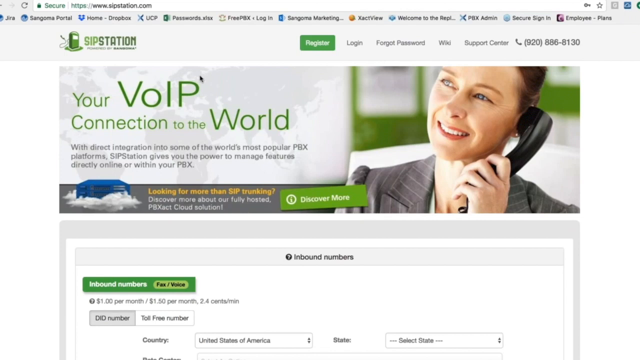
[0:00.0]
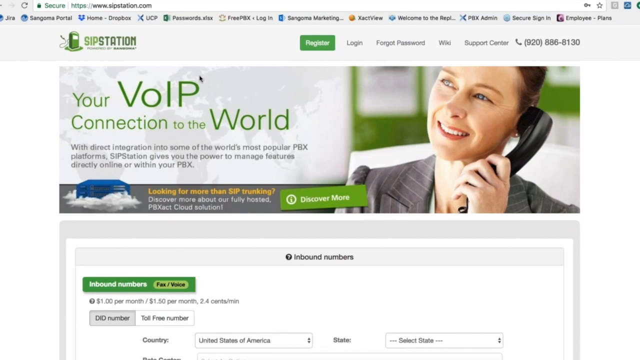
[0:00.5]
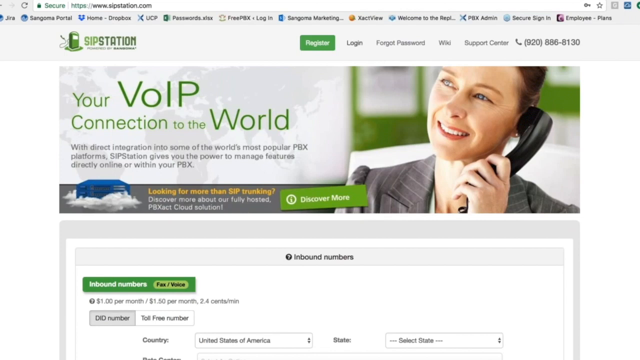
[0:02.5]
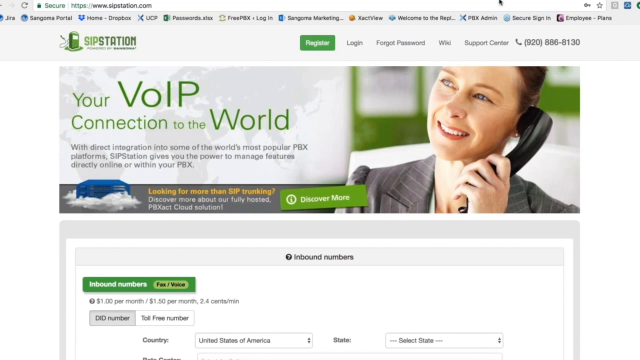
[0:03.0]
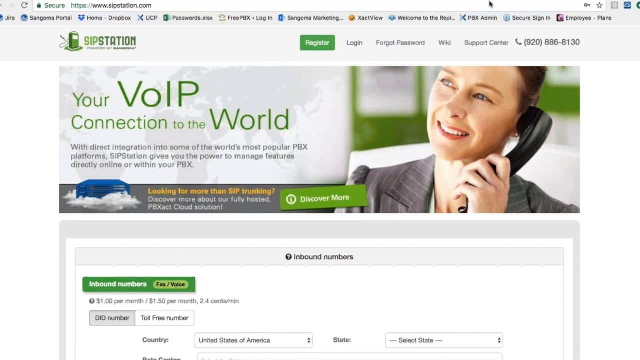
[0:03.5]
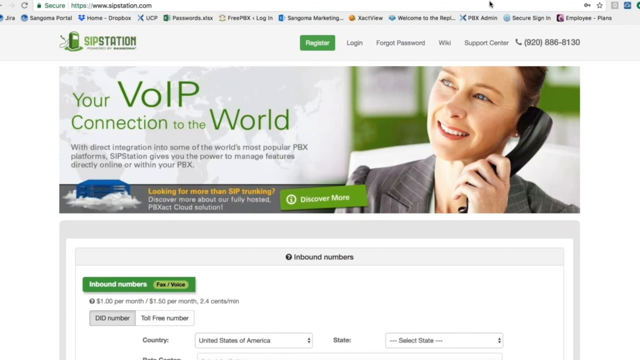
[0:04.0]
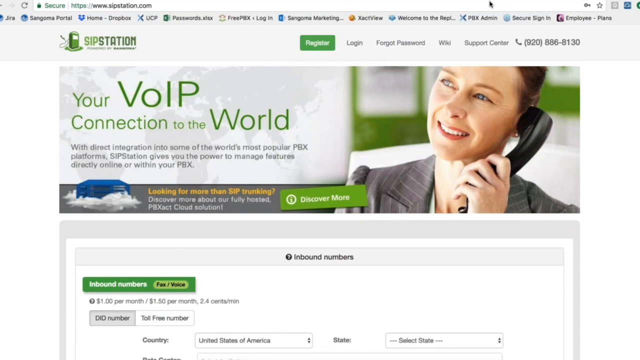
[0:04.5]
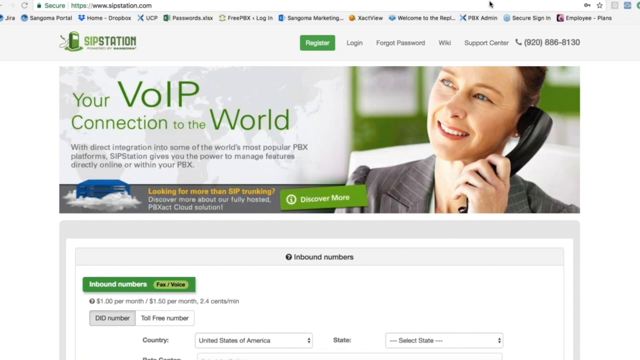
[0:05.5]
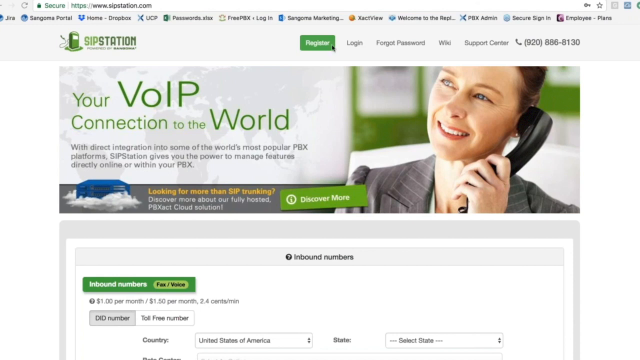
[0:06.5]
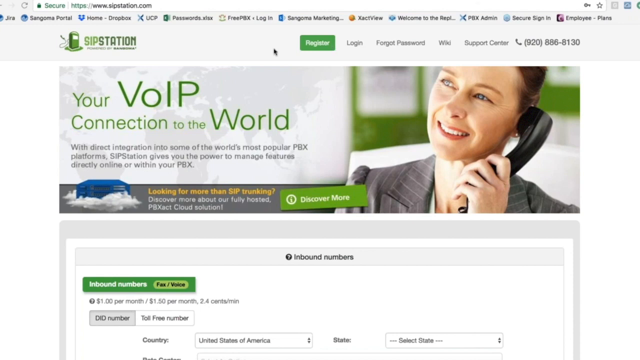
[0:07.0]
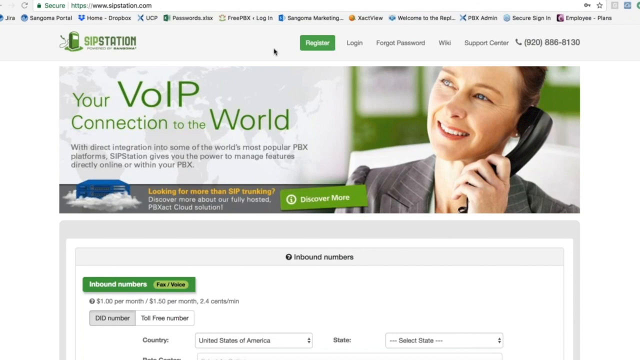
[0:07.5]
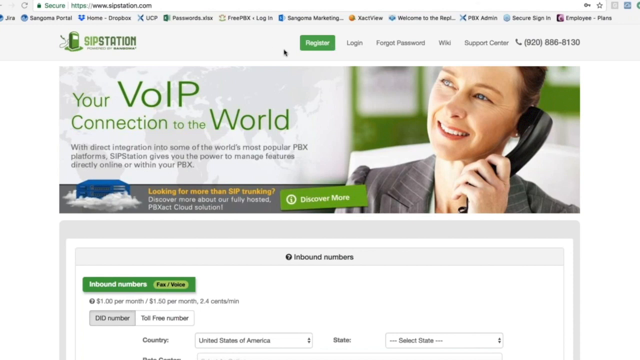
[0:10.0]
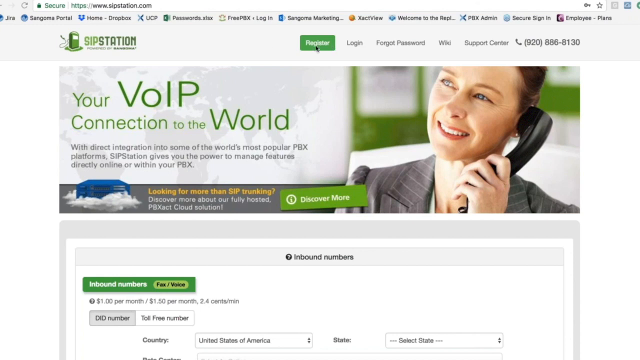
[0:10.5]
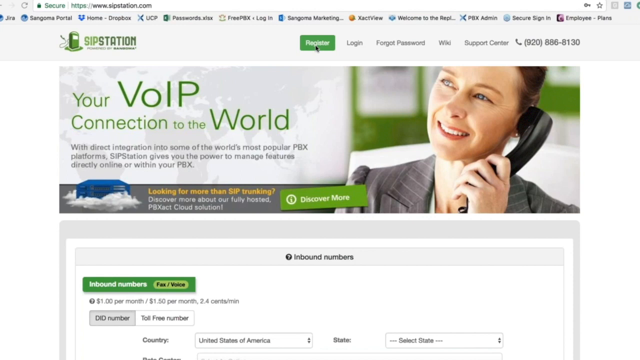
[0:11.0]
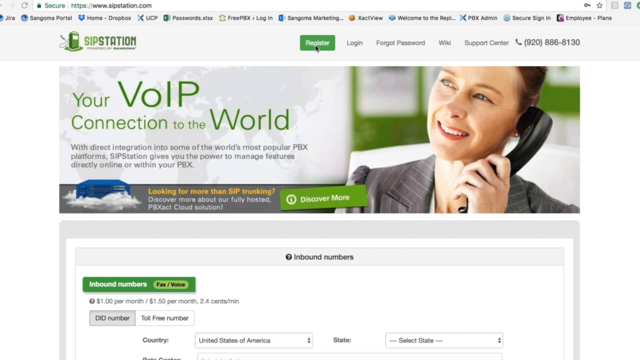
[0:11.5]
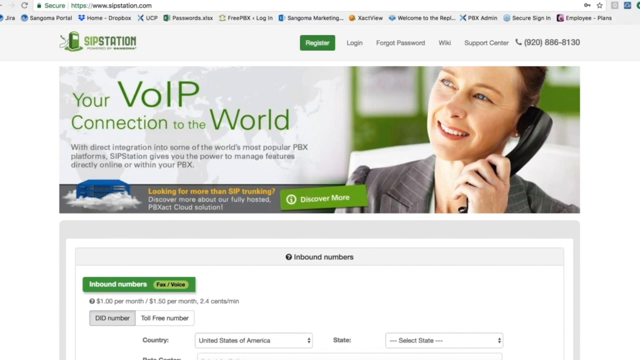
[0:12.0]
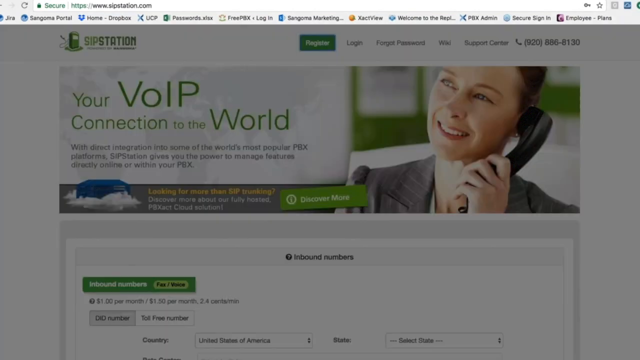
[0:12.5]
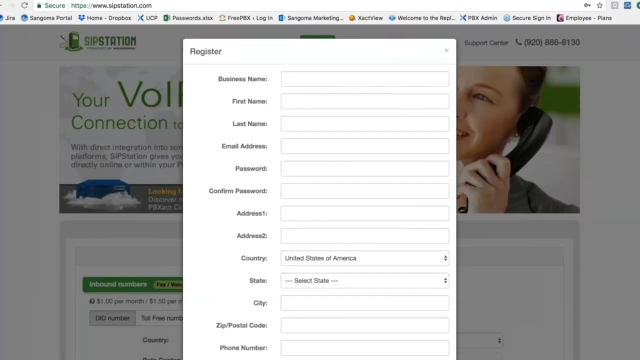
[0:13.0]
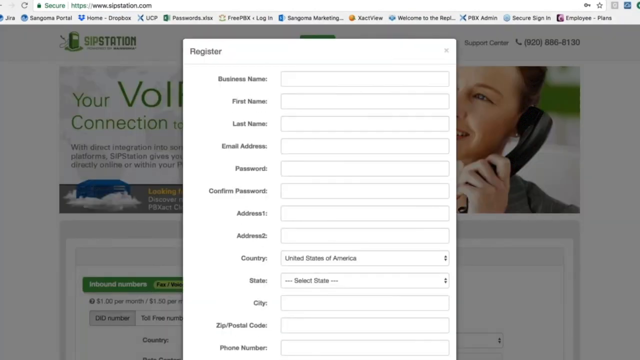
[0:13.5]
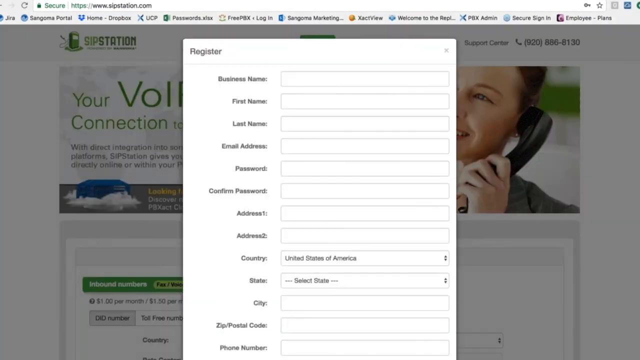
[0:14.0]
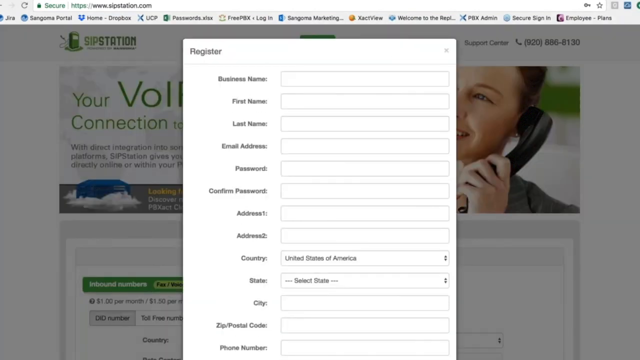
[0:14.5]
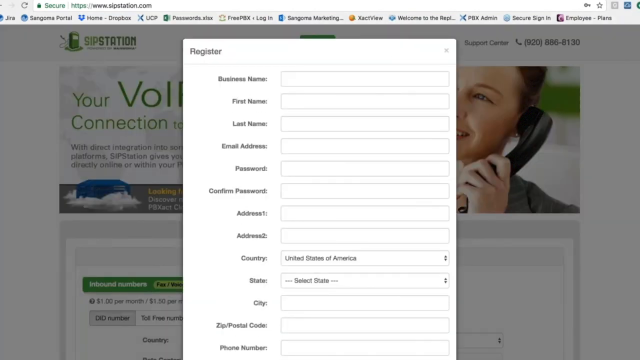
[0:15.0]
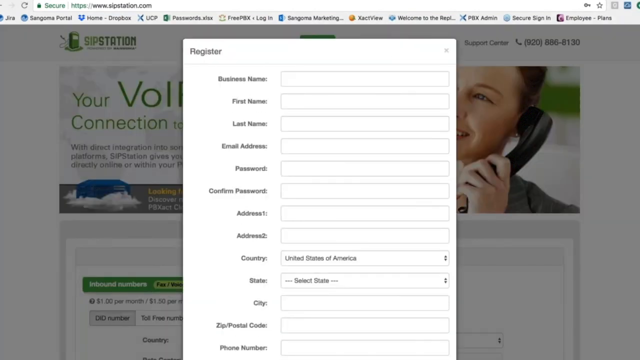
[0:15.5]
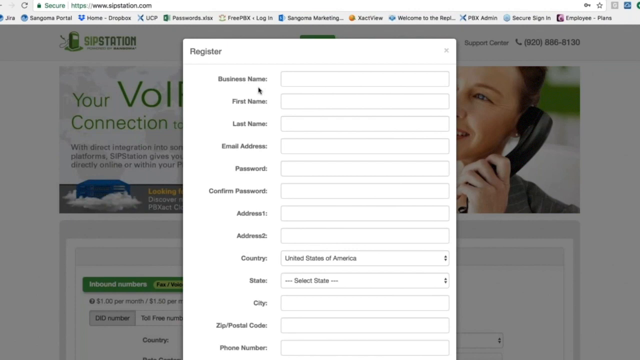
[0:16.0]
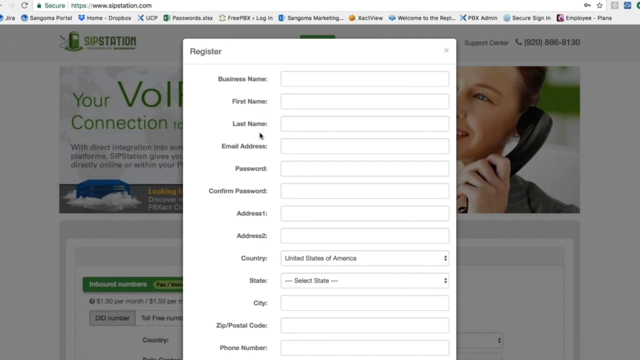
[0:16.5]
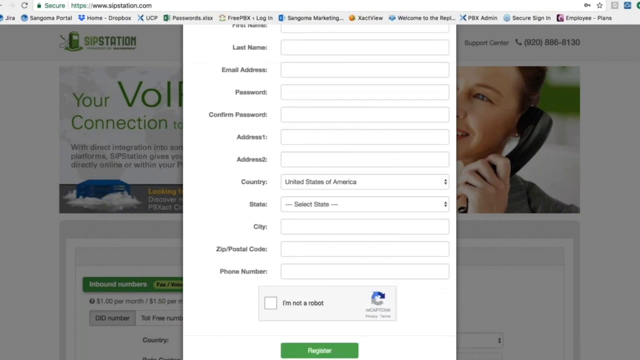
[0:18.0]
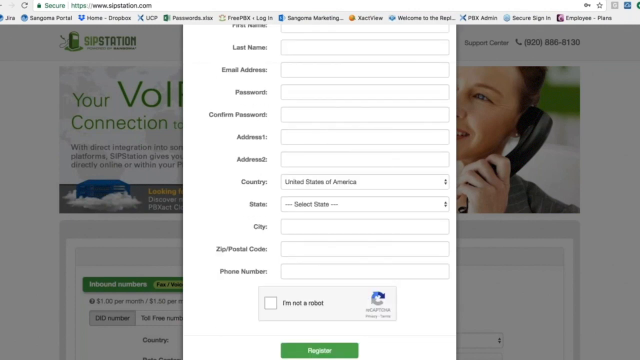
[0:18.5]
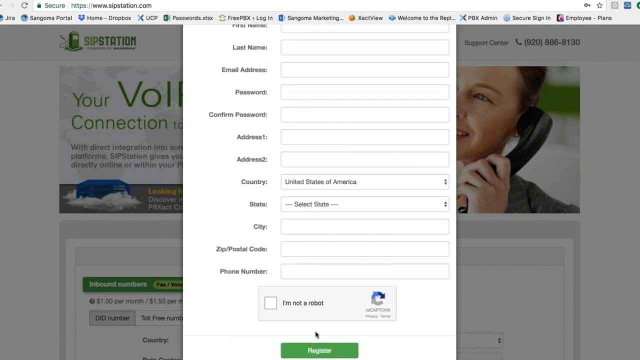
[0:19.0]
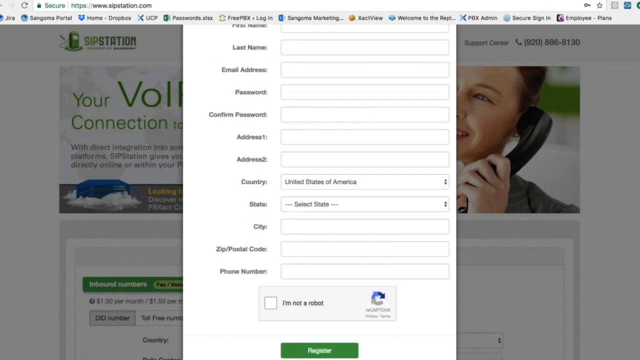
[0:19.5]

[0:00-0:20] A website shows "SipStation" with the text "your VOIP connection to the world" and an image of a woman in a business suit with a phone pressed up to her ear. A mouse cursor moves slightly at the top, then moves to a green "register" button, which is highlighted and clicked. This brings up a white box that takes up the main part of the screen, listing various boxes: business name, first name, last name, email address, password, confirm password, address one, address two, country, state, city, and zip code. The mouse goes down to last name, goes a little further, and then goes toward the very bottom of the screen.